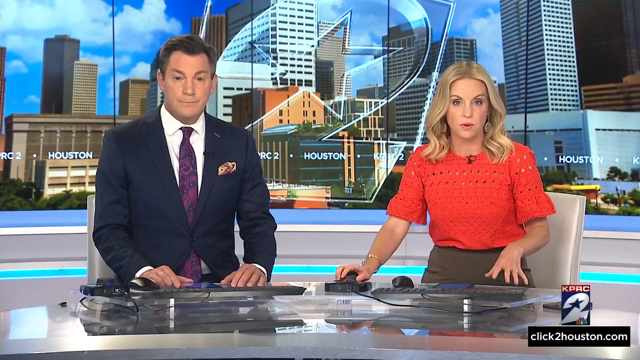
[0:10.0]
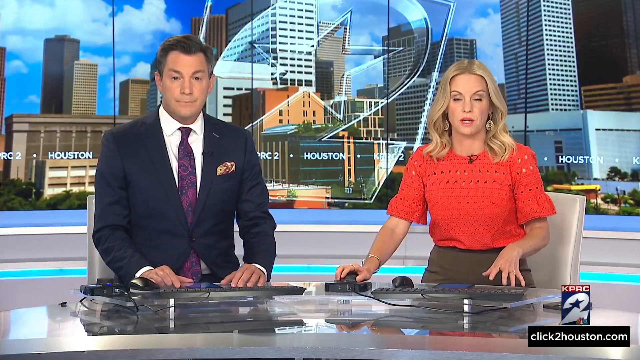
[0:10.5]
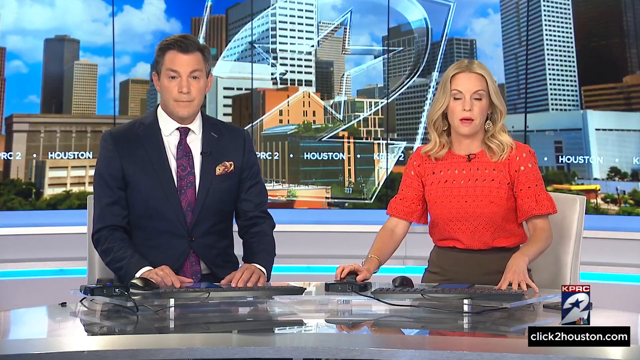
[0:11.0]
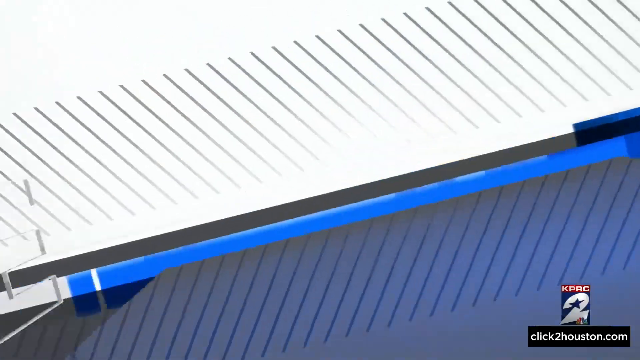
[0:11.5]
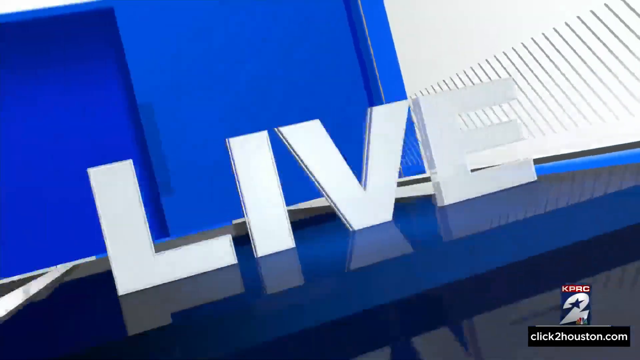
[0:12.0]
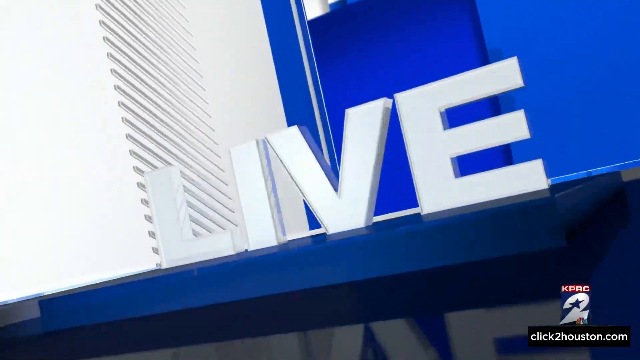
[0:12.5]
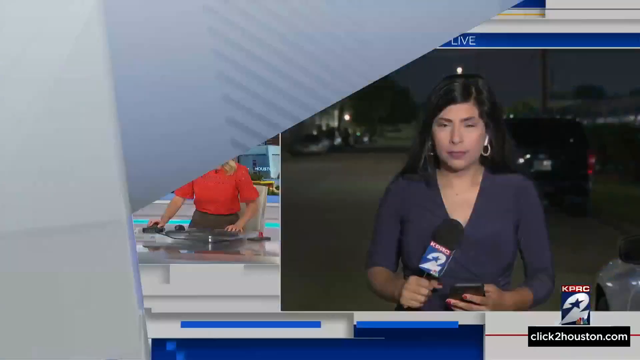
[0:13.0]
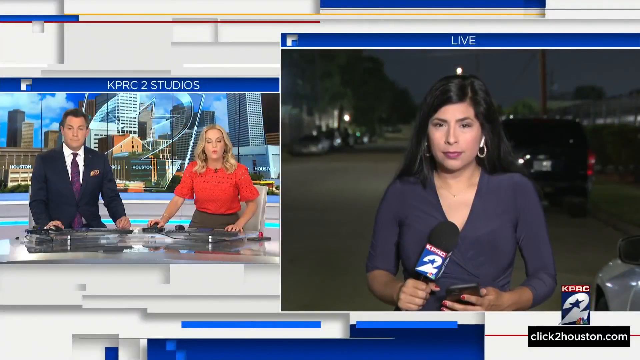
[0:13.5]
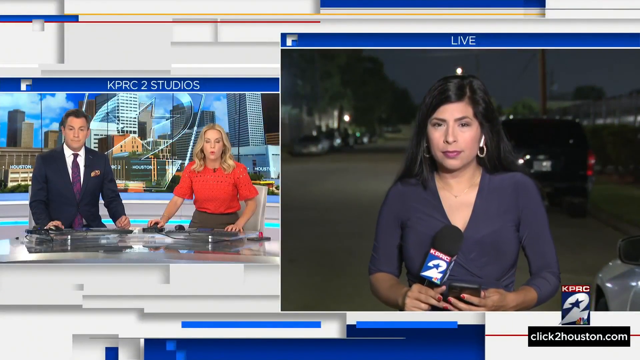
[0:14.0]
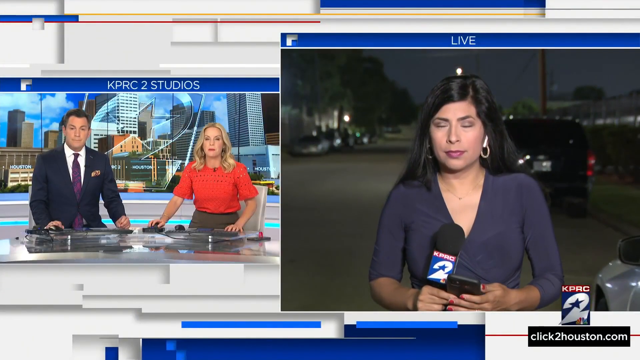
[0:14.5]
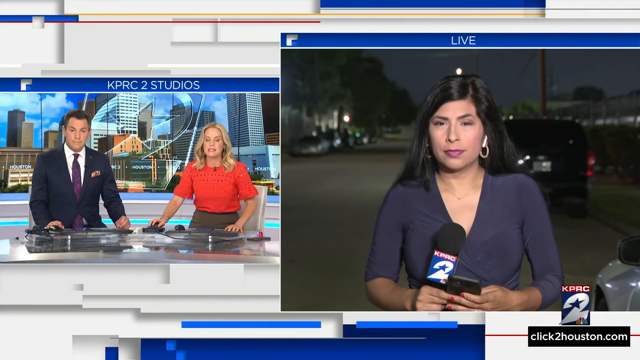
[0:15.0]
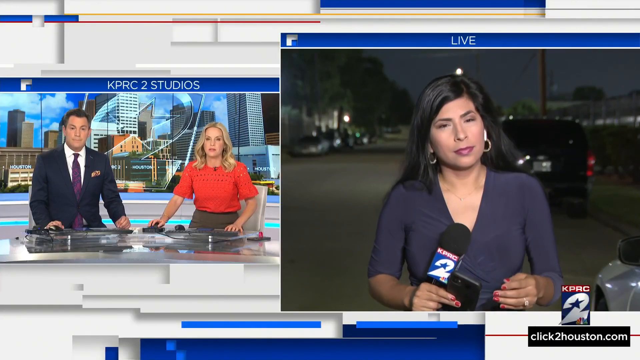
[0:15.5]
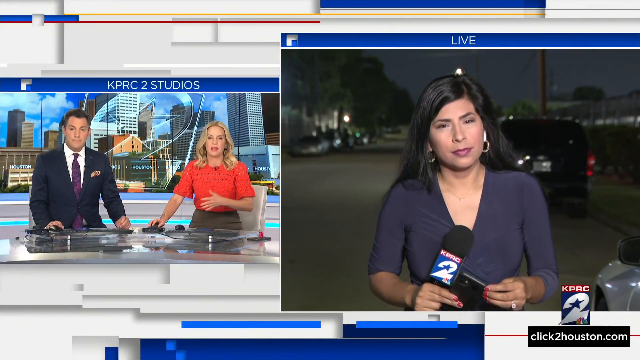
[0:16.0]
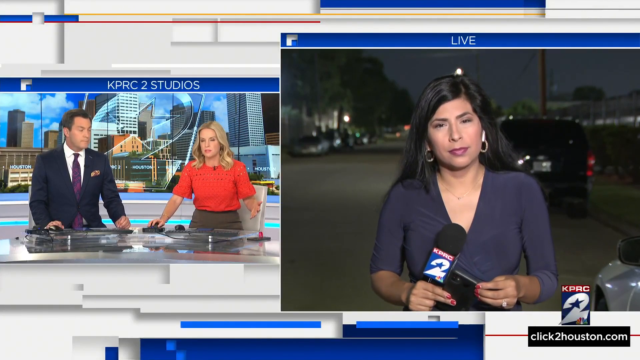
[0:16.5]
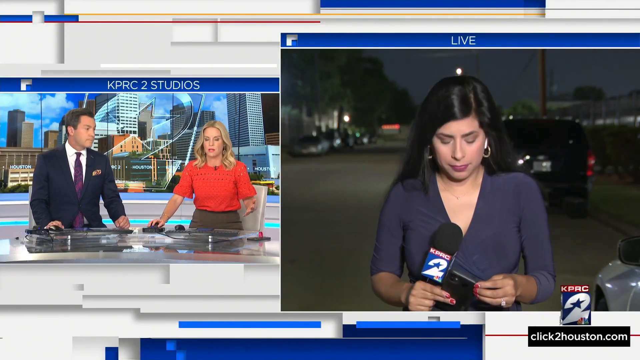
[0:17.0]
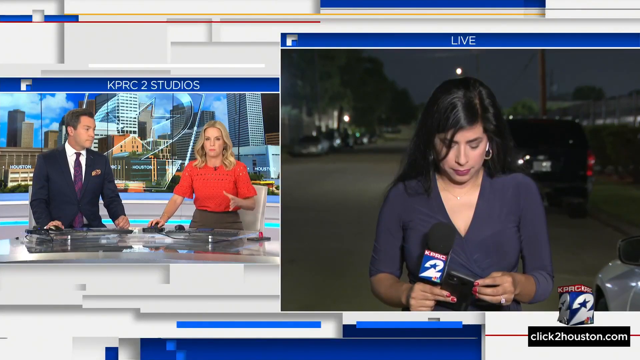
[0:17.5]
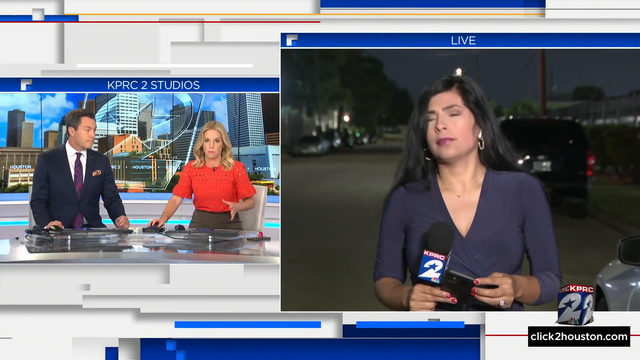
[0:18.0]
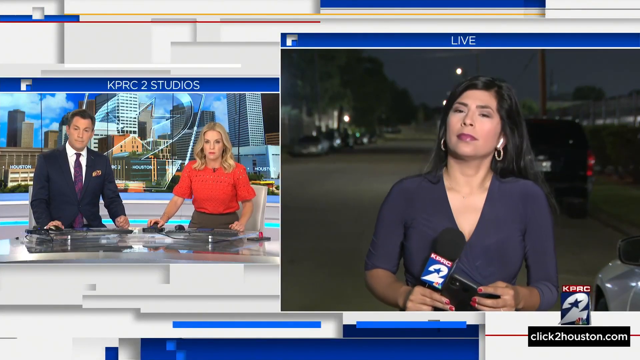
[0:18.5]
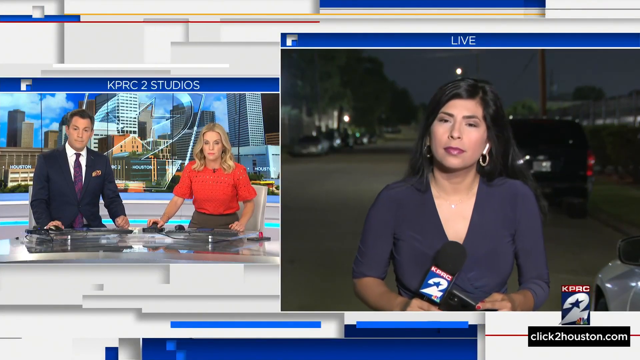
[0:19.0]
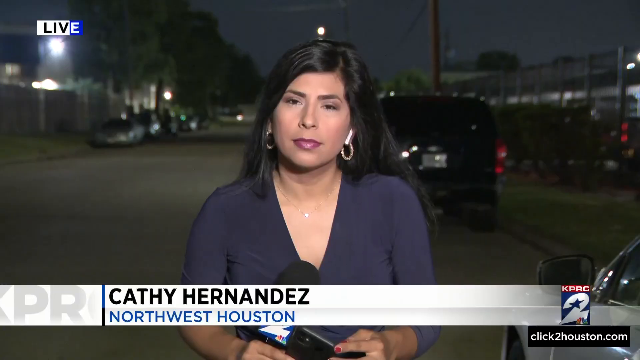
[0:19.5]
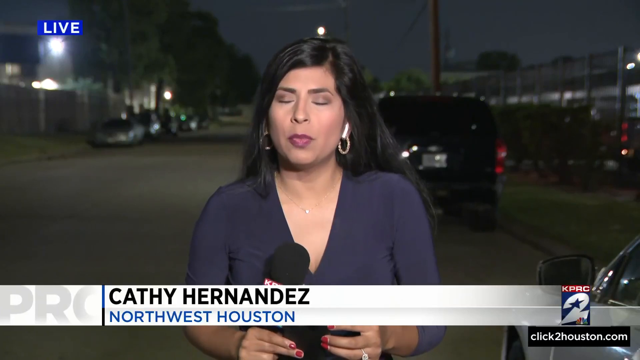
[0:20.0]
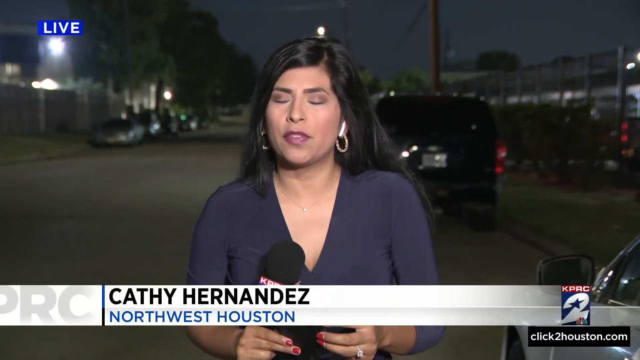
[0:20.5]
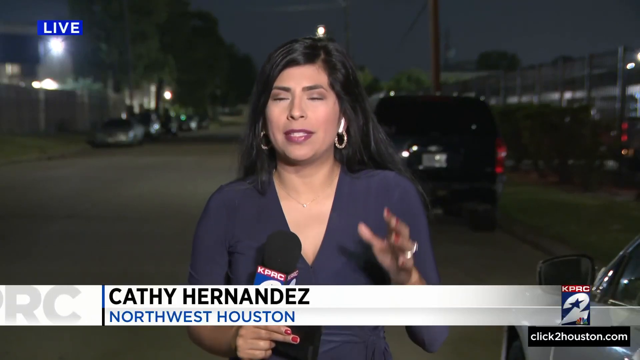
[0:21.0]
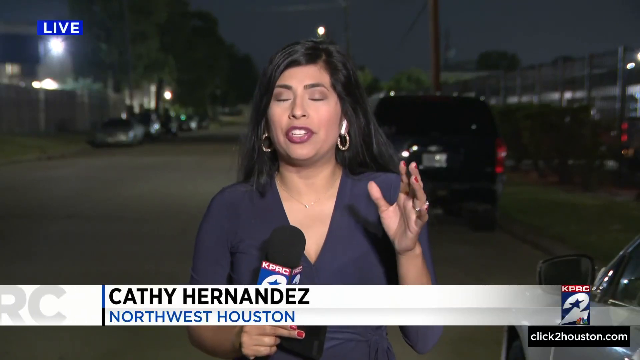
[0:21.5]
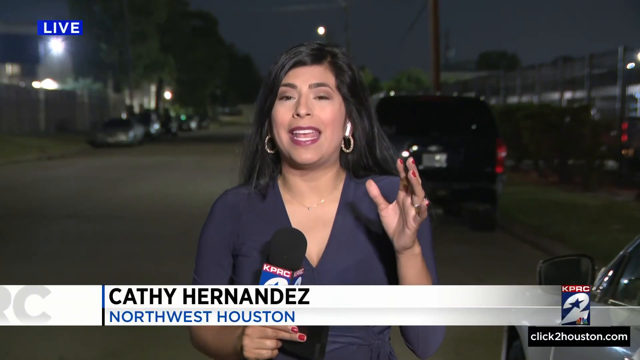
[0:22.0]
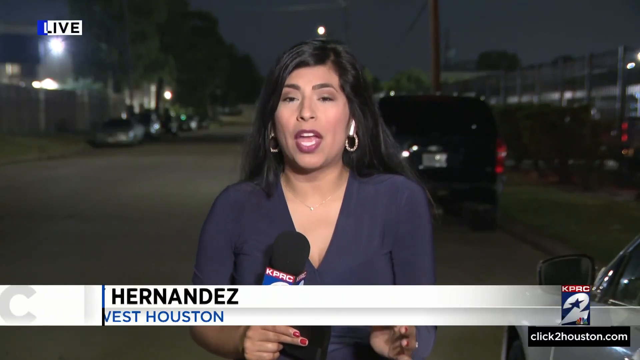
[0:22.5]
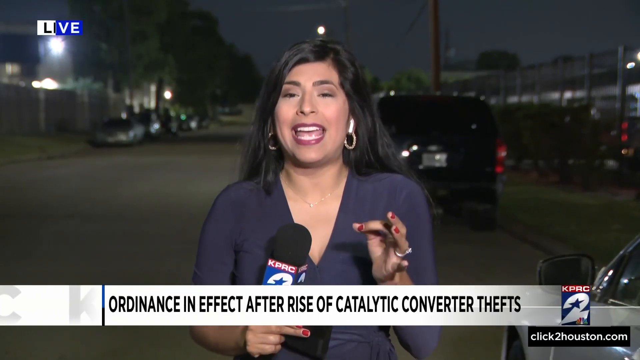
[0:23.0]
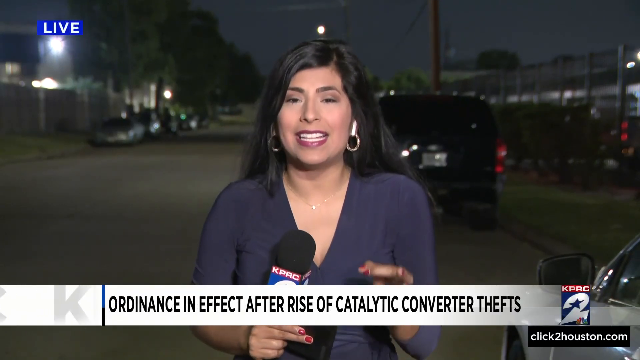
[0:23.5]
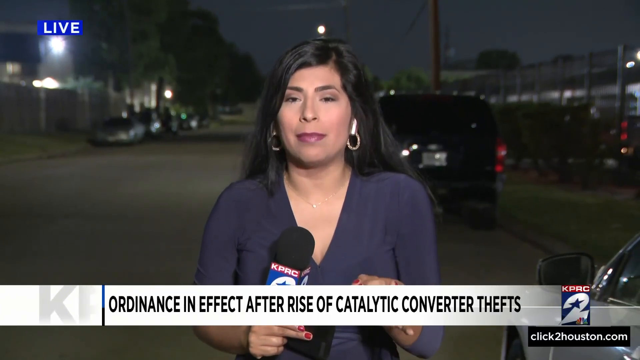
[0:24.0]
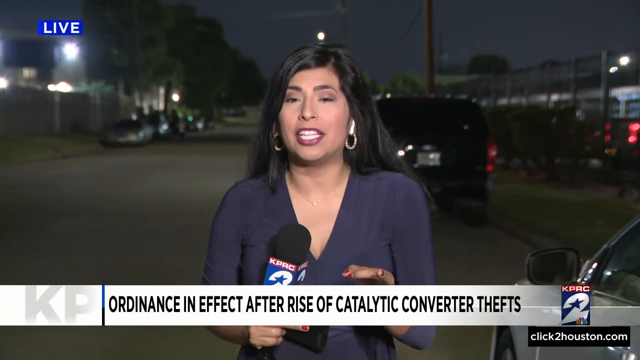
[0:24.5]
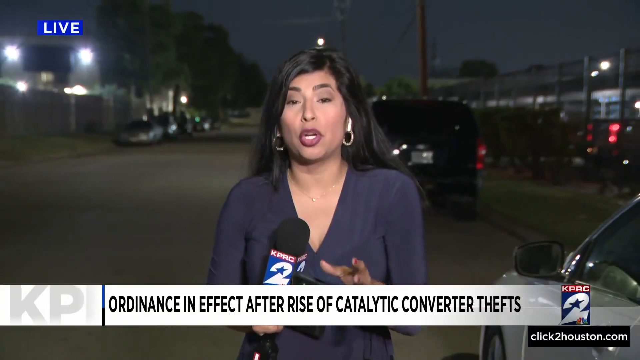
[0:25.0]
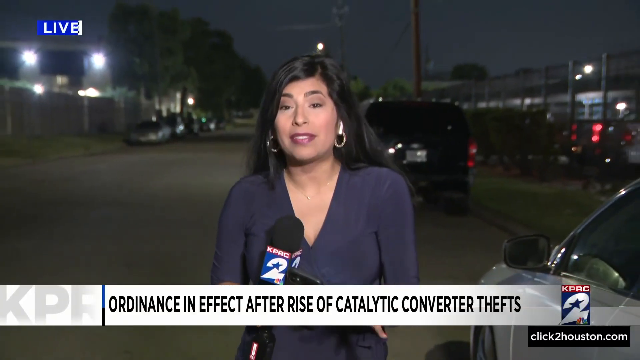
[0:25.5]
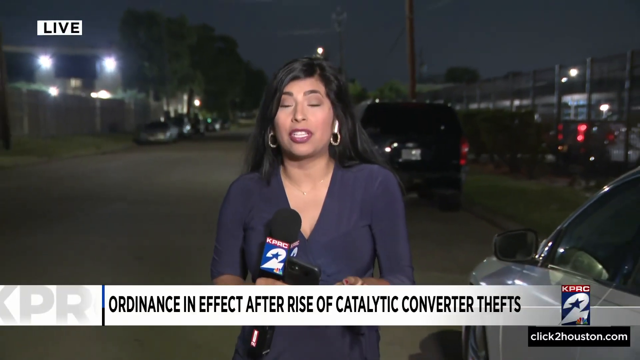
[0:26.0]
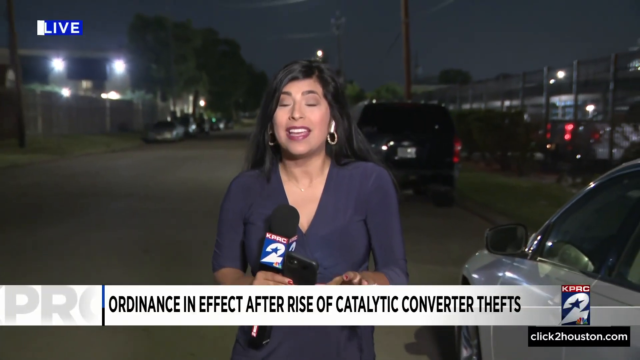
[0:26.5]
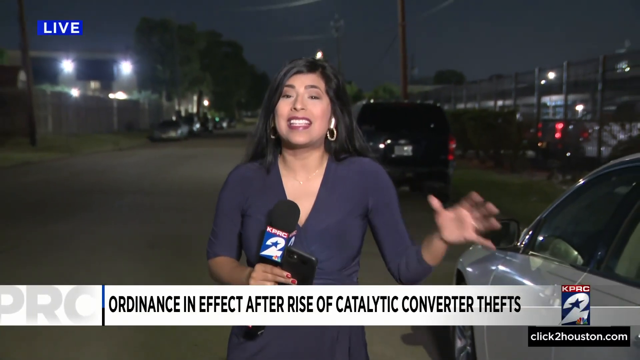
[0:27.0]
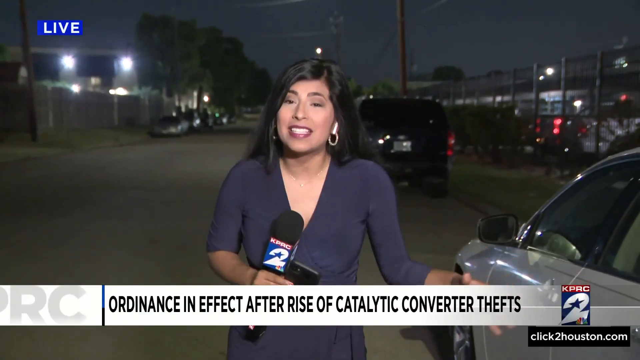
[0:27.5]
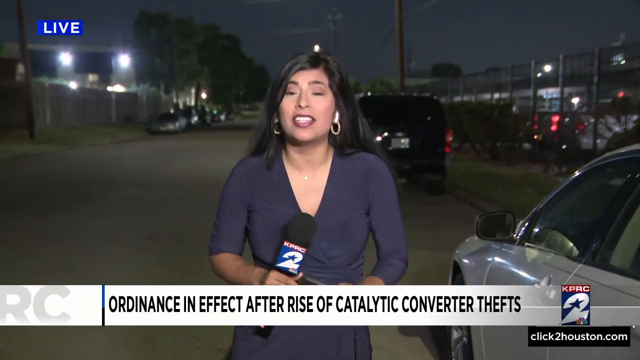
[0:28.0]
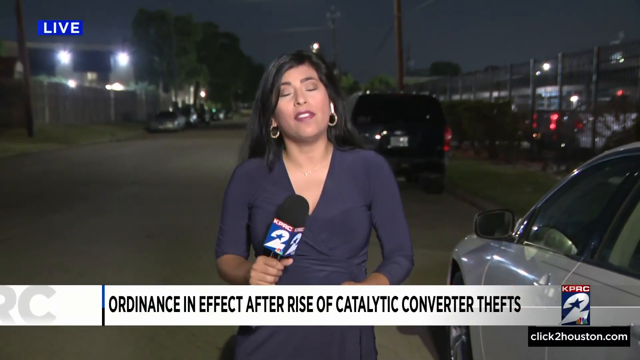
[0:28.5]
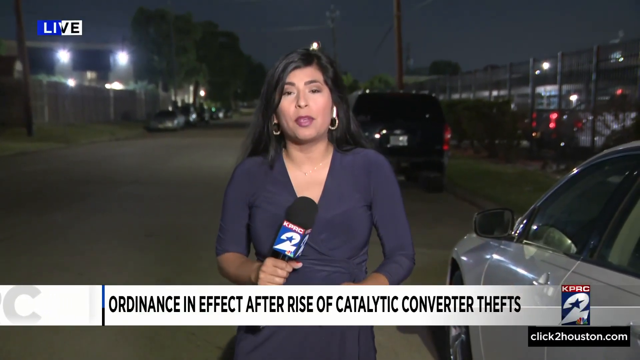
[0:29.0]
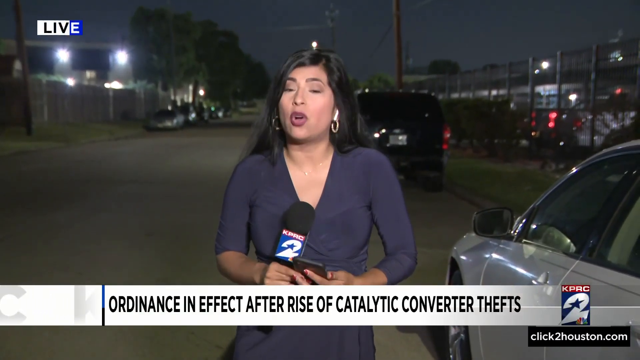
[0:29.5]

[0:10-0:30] The woman on the right is speaking, then a transition shot with the word "live" in white moves across the center of the frame. The screen then splits: a larger portion on the right shows a woman reporter with "live" above it, and the left side, labeled "KPRC 2 Studios", shows the man and woman newscasters from the studio speaking to her as she reports from the street. Text reads "Northwest Houston" and gives the reporter's name as Cathy Hernandez. She wears a purple dress and has black hair. Behind her is a street lined with cars on each side, and it is nighttime. Along the bottom it says "ordinance in effect after rise of catalytic converter thefts", so the report appears to be about catalytic converters.